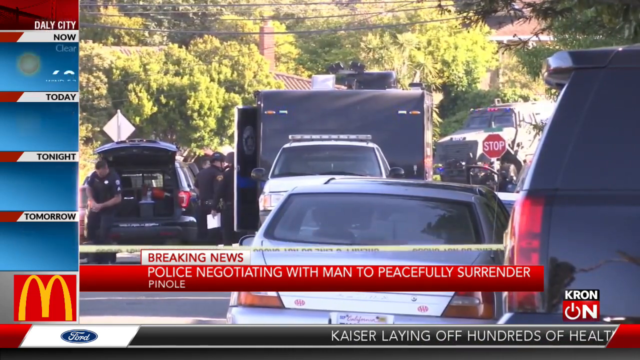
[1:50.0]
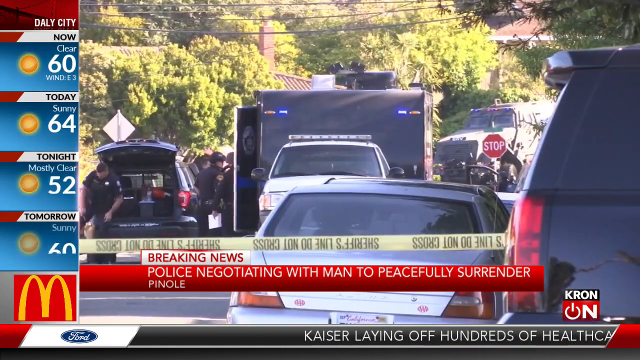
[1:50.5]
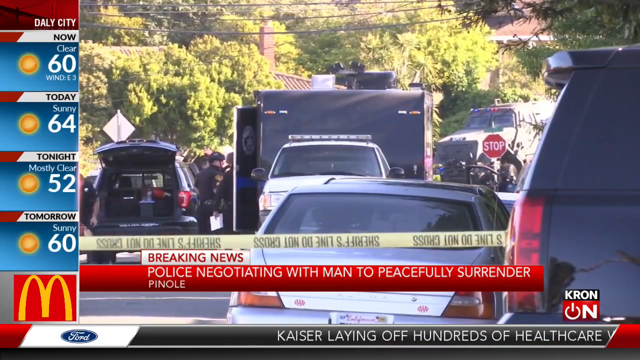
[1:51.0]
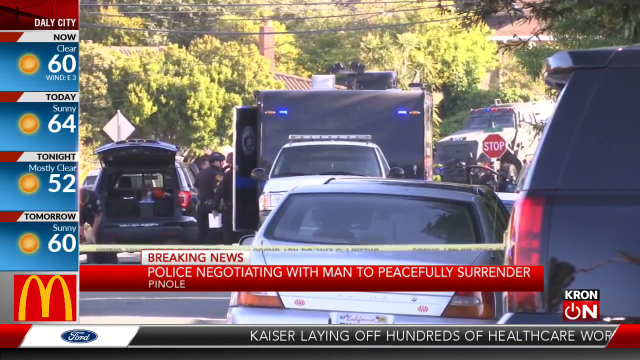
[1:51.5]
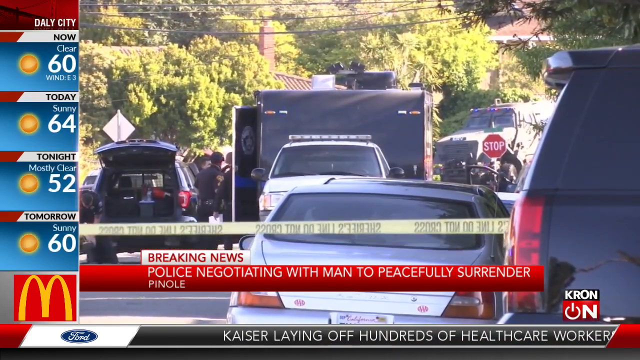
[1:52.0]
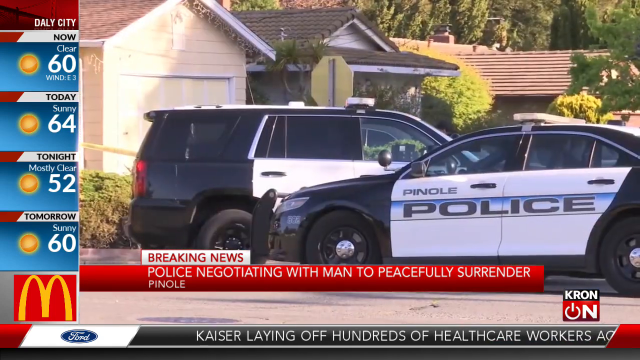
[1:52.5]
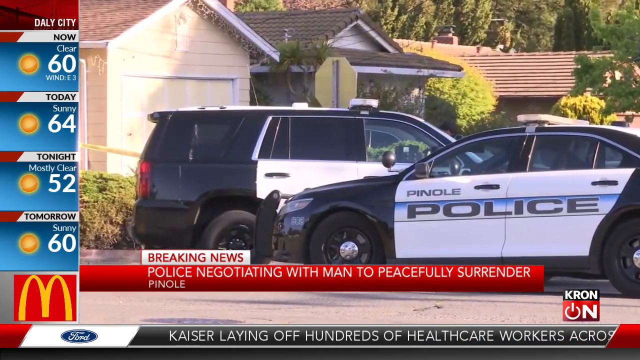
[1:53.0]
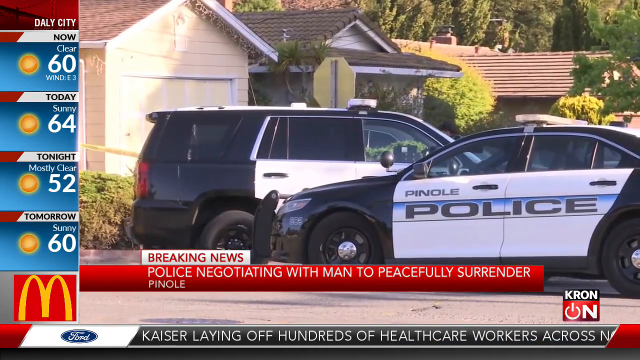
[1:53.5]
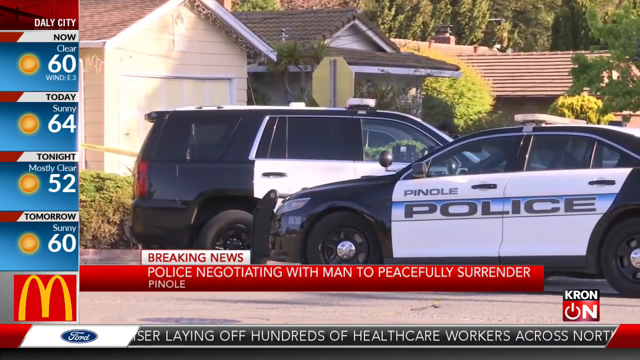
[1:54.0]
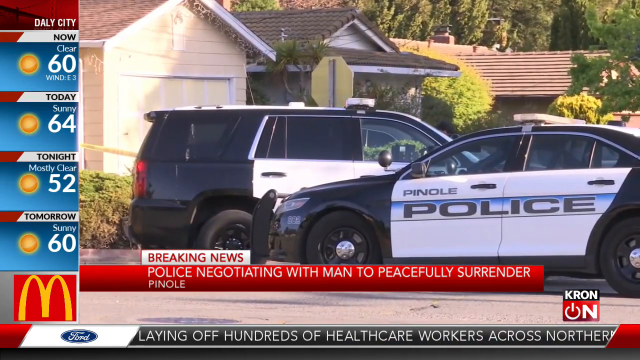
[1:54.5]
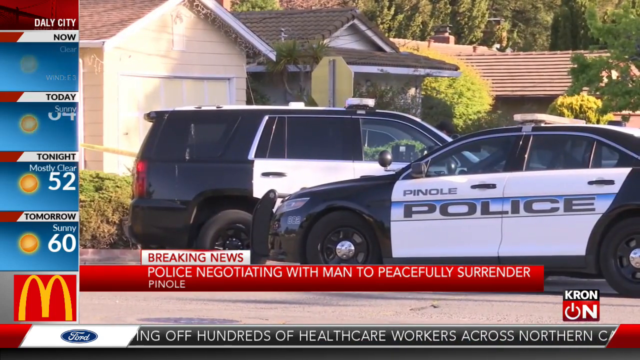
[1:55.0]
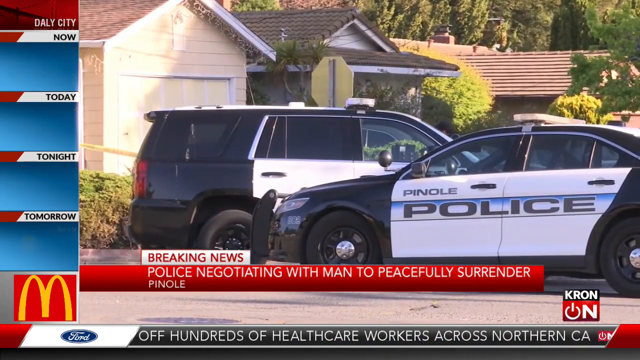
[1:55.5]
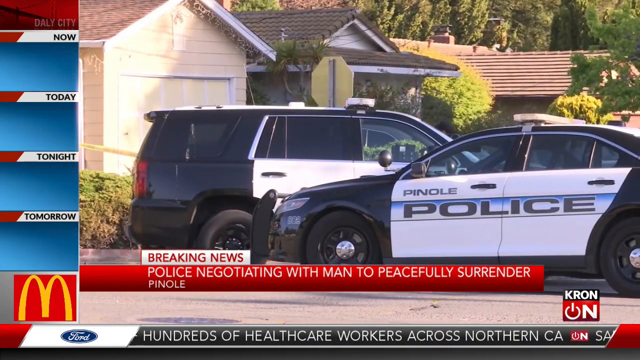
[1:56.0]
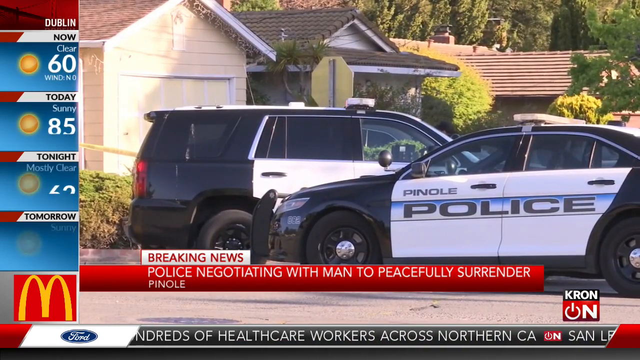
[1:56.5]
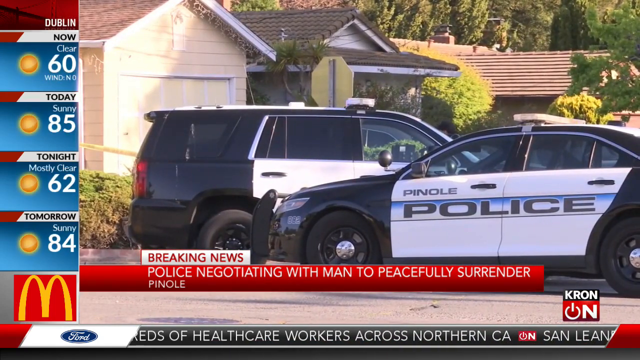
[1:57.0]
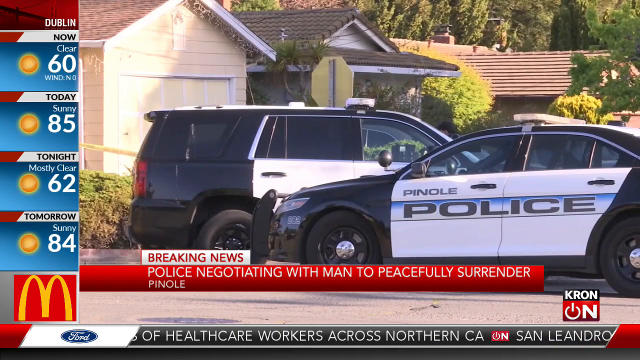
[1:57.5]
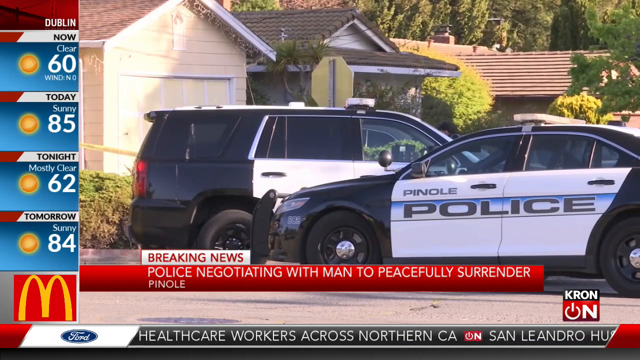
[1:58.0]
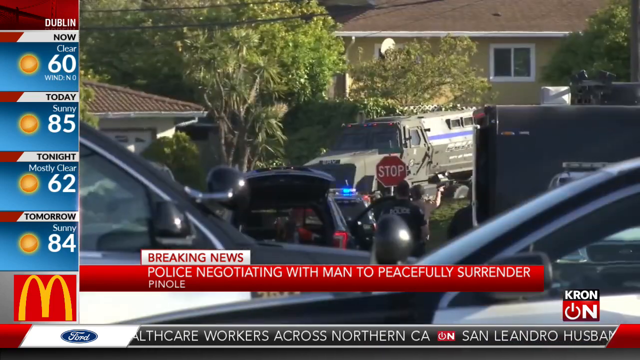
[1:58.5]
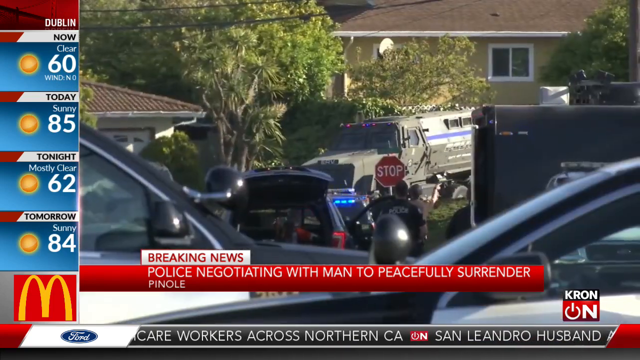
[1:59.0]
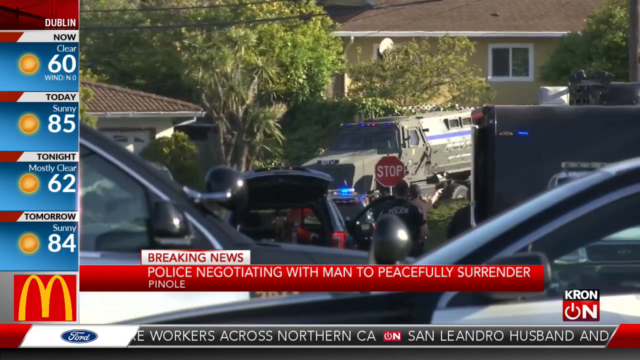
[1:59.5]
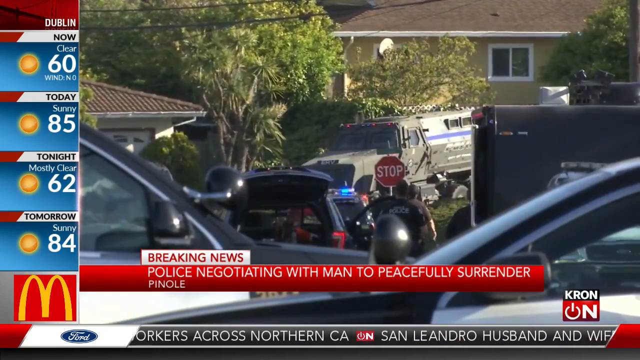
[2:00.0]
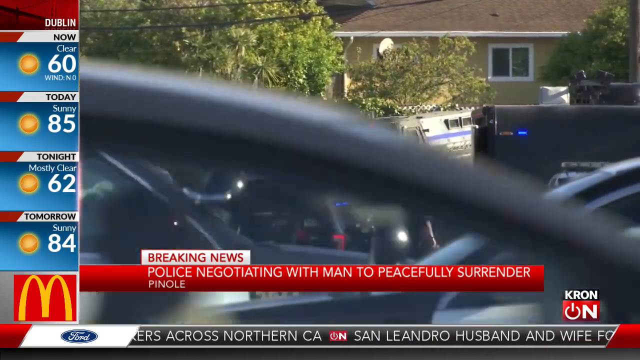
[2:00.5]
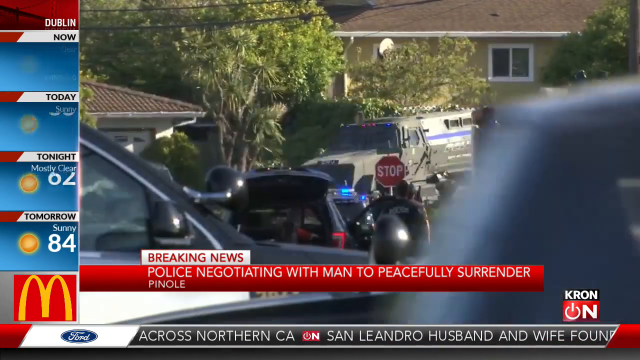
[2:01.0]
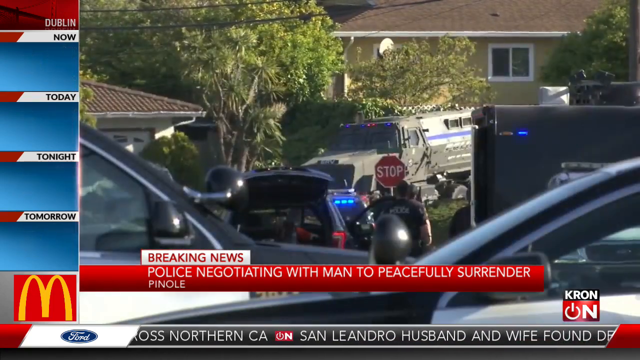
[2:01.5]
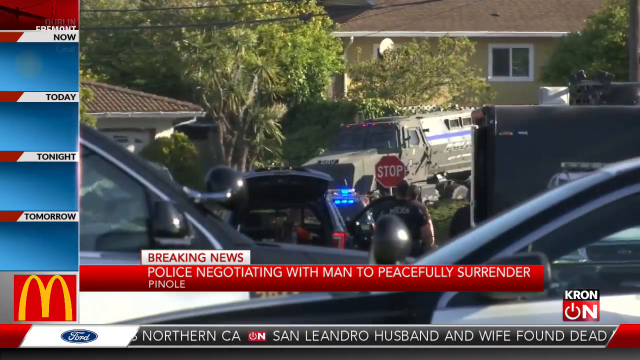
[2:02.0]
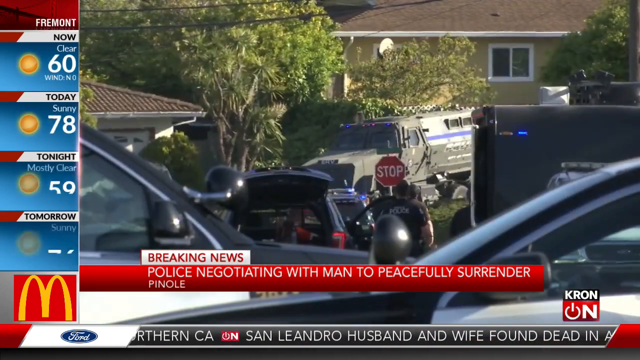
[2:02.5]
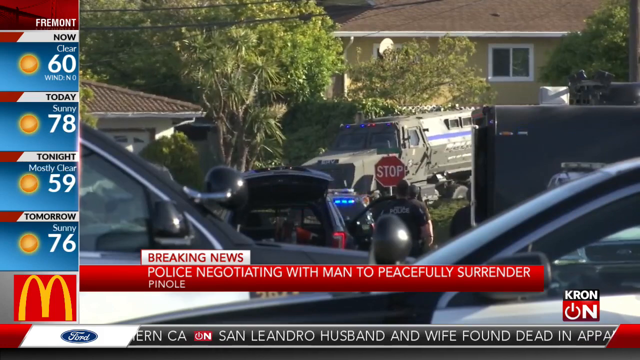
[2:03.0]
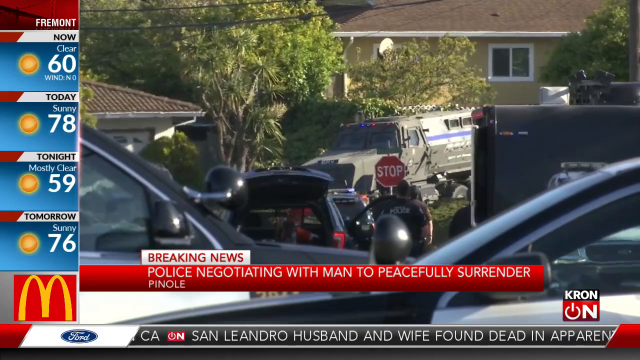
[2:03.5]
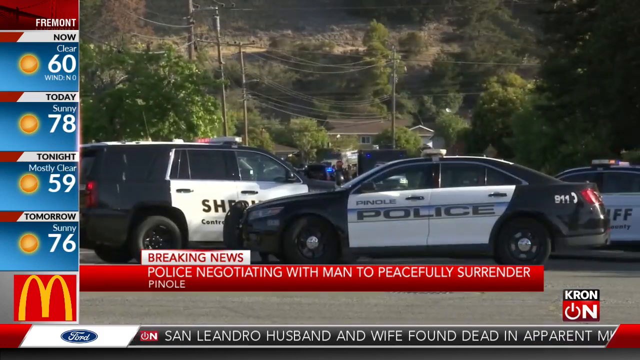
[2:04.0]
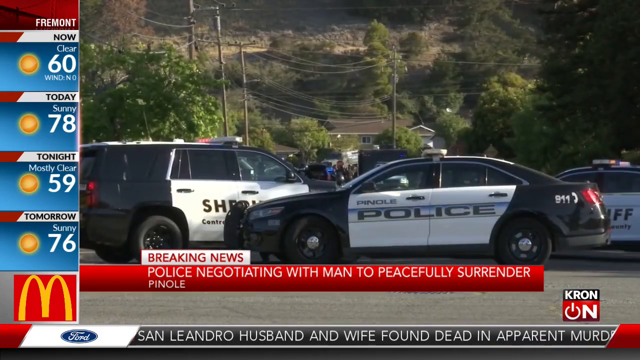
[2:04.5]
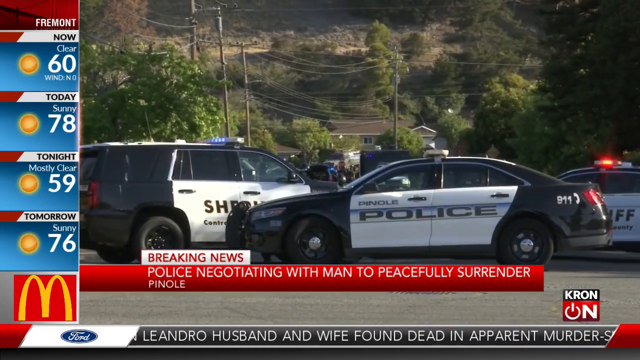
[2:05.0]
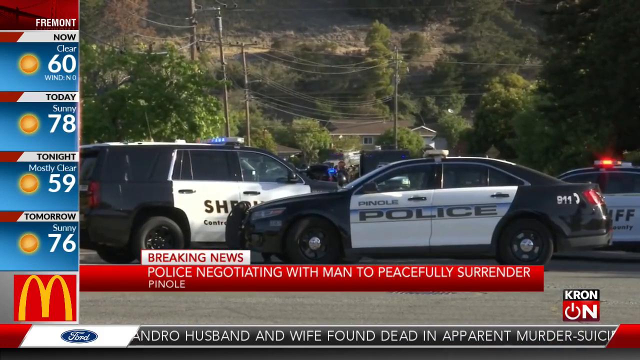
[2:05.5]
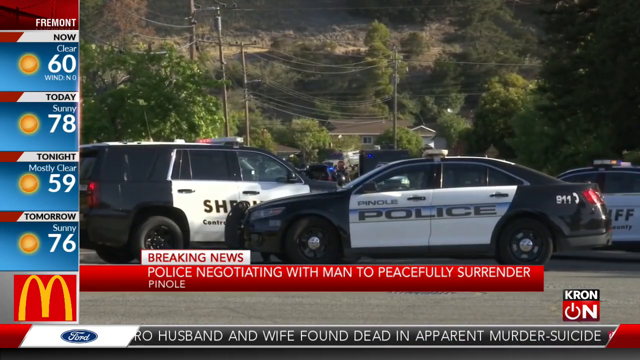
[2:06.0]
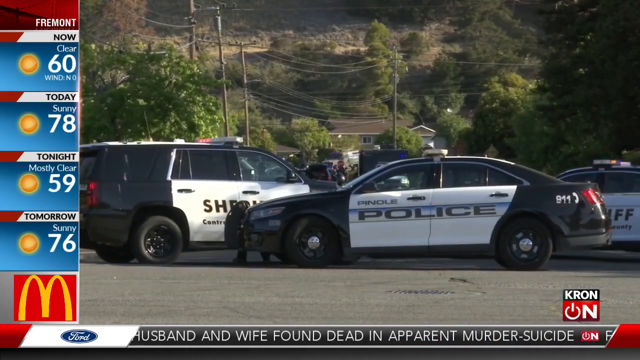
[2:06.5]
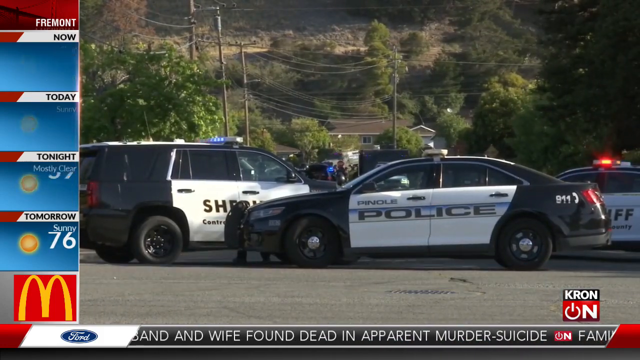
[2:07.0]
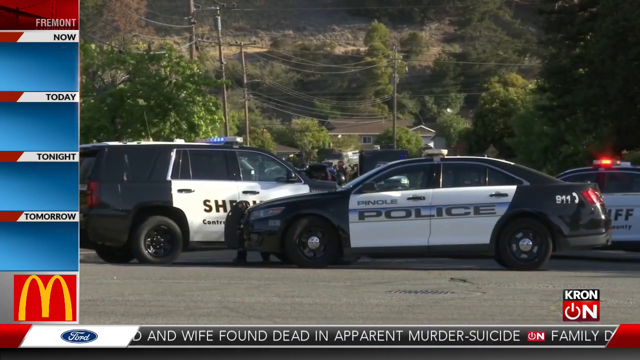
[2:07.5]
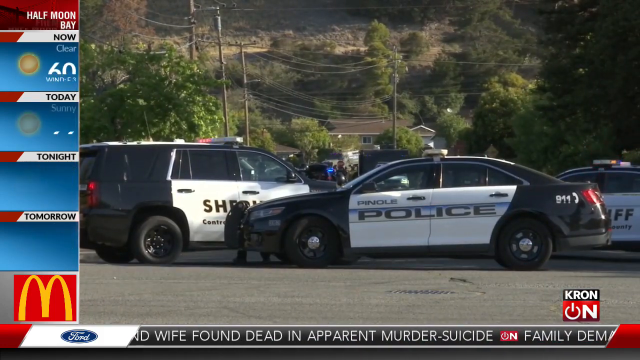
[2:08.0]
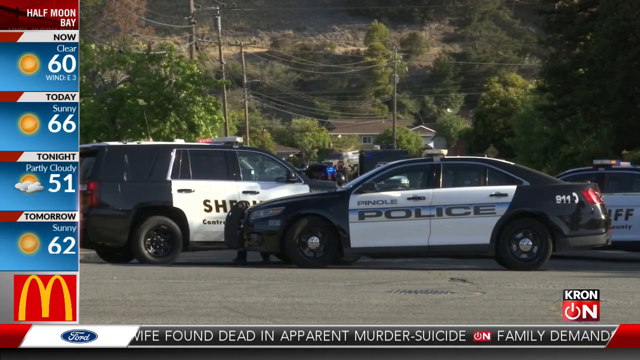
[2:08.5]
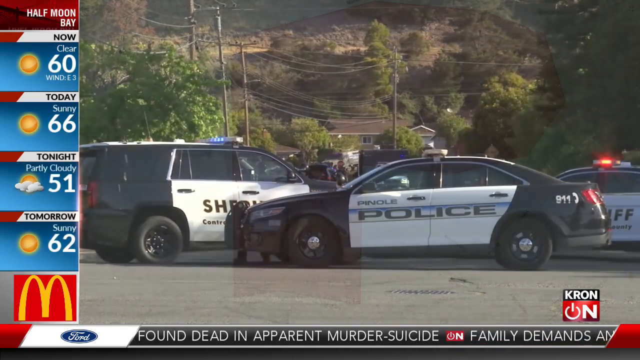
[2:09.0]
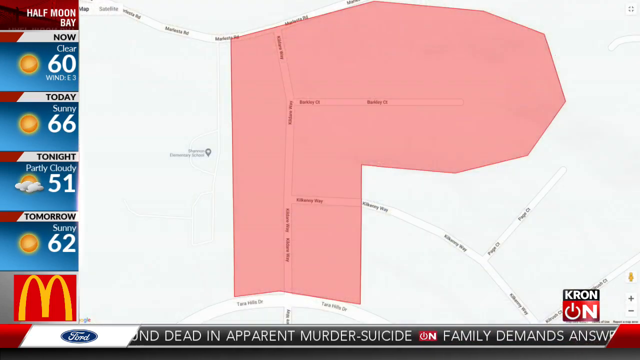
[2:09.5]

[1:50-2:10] Some police cars are shown behind a line that perhaps reads "police line do not cross", though it is not clearly visible. There is a good number of cars, and one policeman on the left side of the image at a car with its back open. The red bar at the bottom of the screen still reads "police negotiating with man to peacefully surrender" in Pinole, with the small white breaking news bar on top of it. Kron is identified as the TV station, and the column on the left presents the weather, now in Delhi city, with the McDonald's sign at its bottom, in the bottom left of the image. Nothing much happens. Another camera view shows two police cars with some houses behind them, with no action at all.